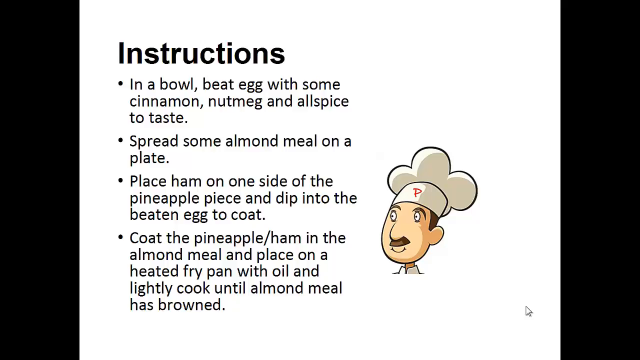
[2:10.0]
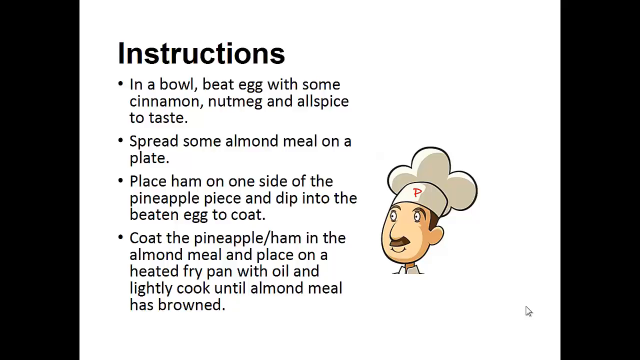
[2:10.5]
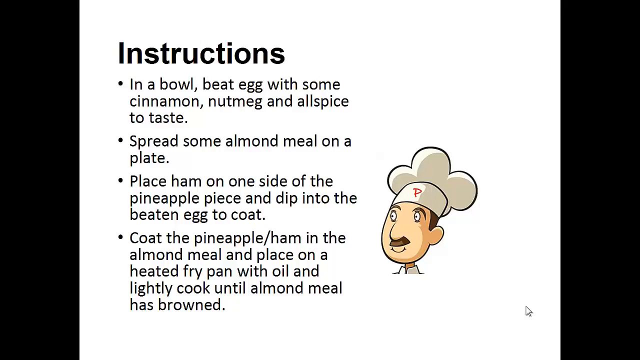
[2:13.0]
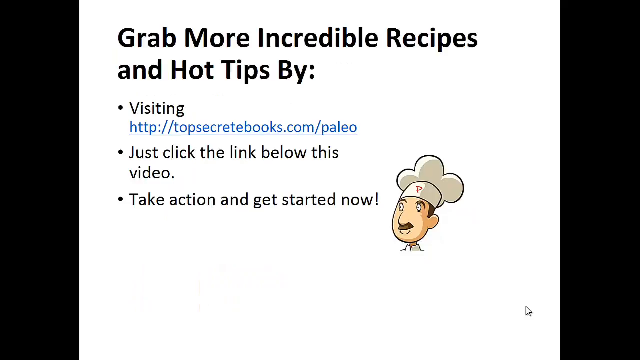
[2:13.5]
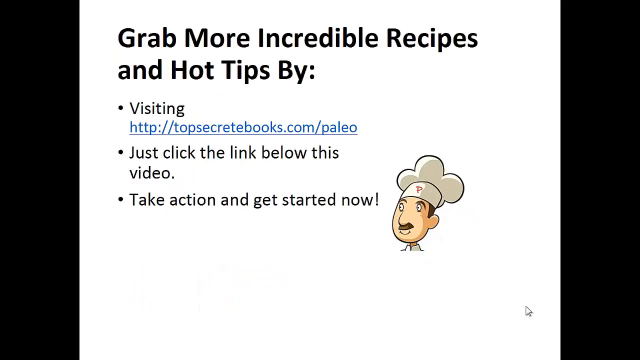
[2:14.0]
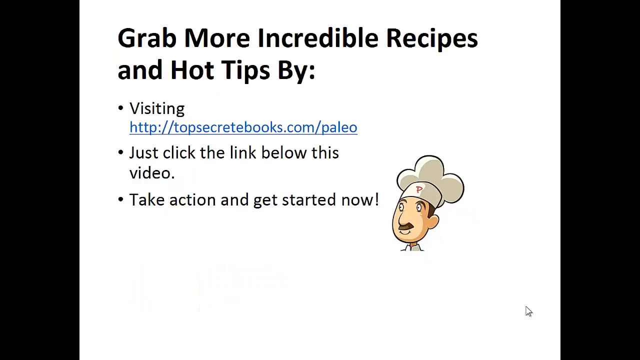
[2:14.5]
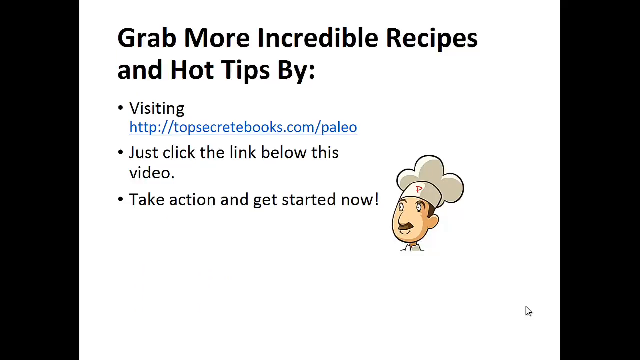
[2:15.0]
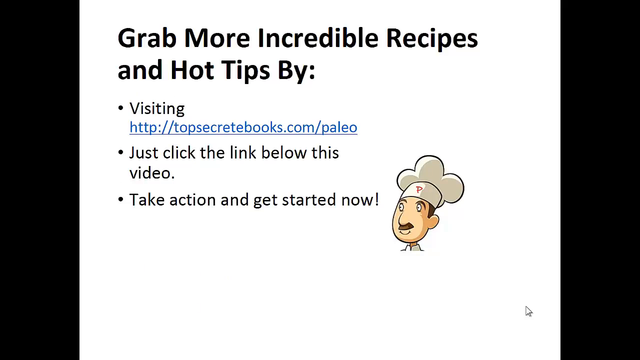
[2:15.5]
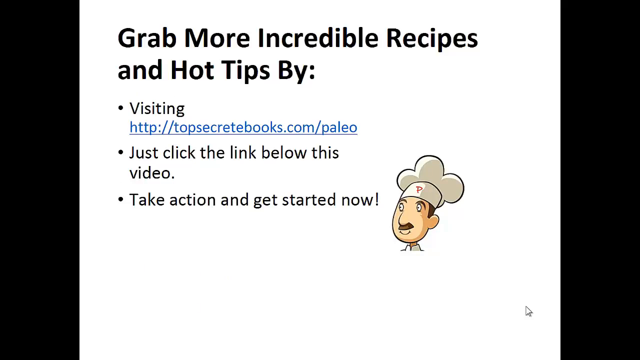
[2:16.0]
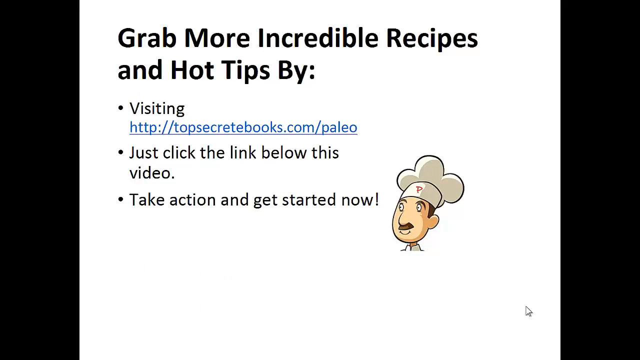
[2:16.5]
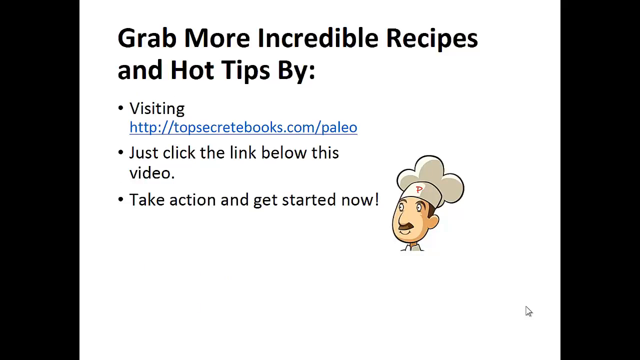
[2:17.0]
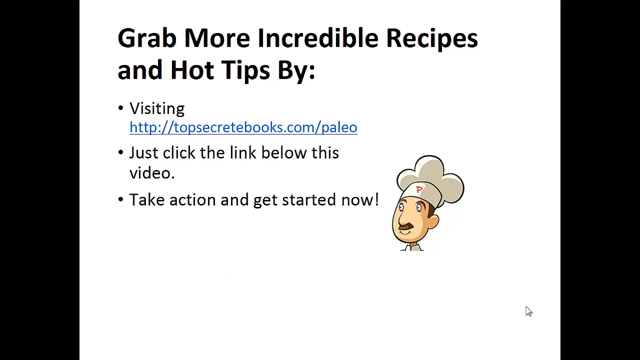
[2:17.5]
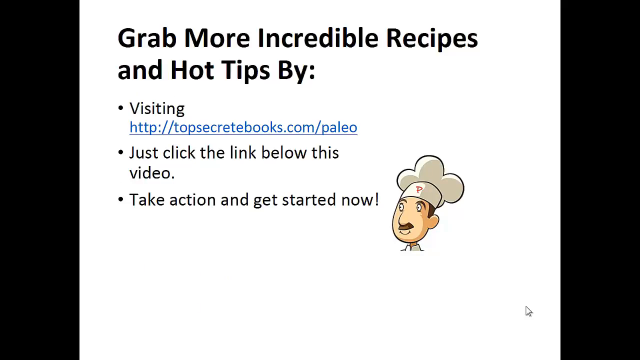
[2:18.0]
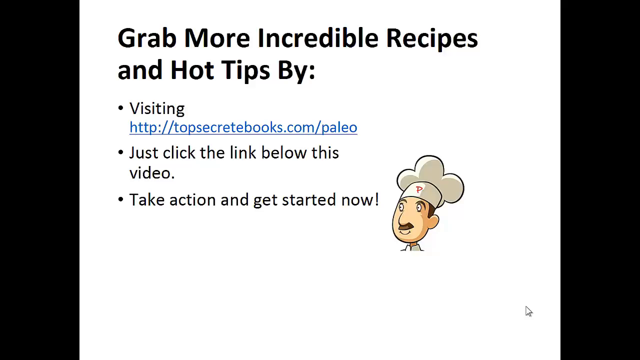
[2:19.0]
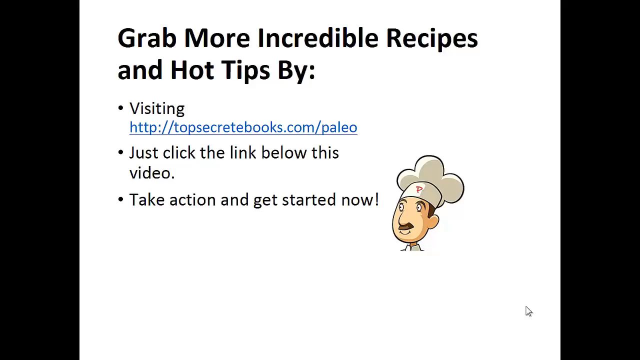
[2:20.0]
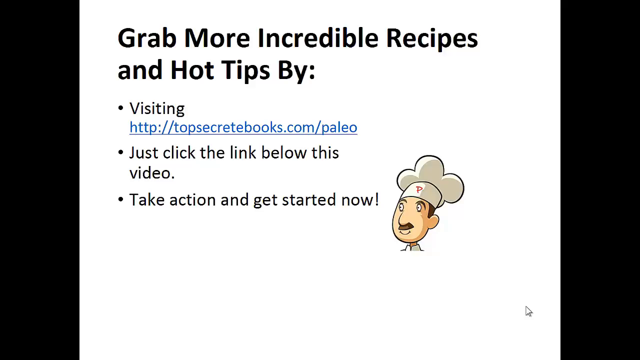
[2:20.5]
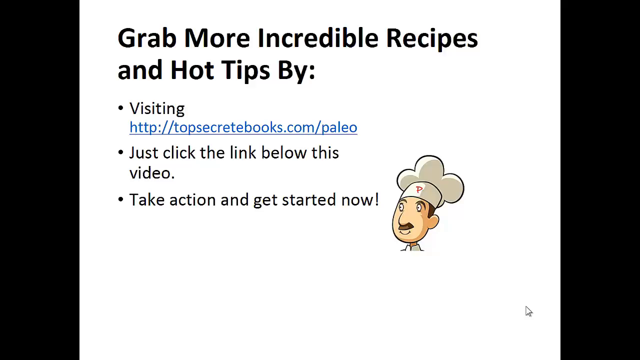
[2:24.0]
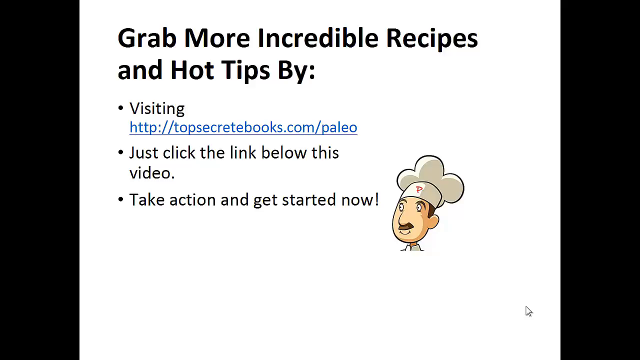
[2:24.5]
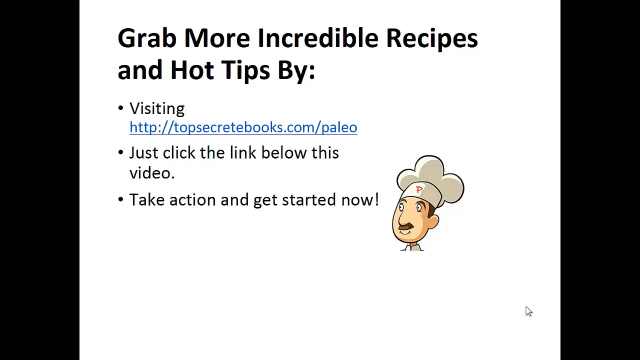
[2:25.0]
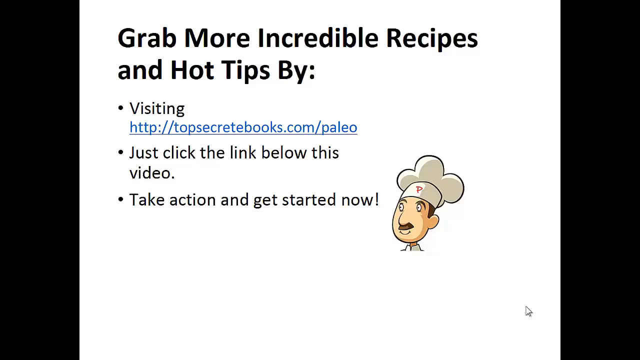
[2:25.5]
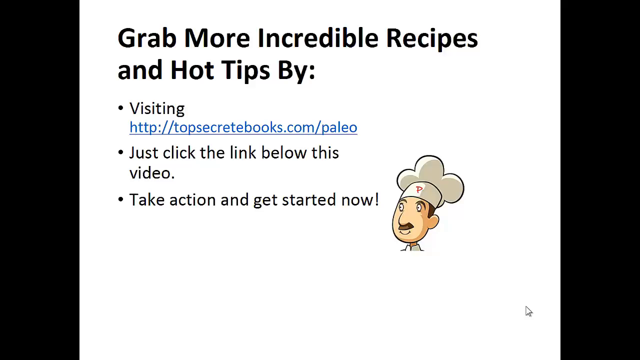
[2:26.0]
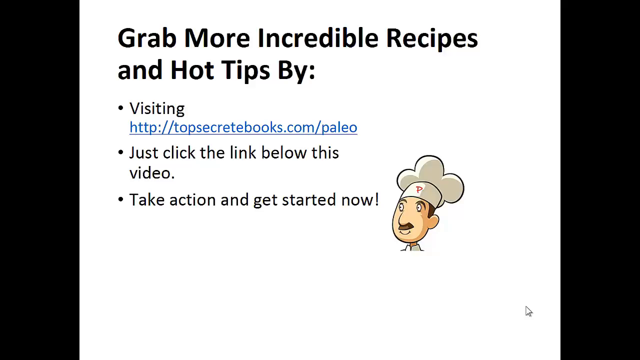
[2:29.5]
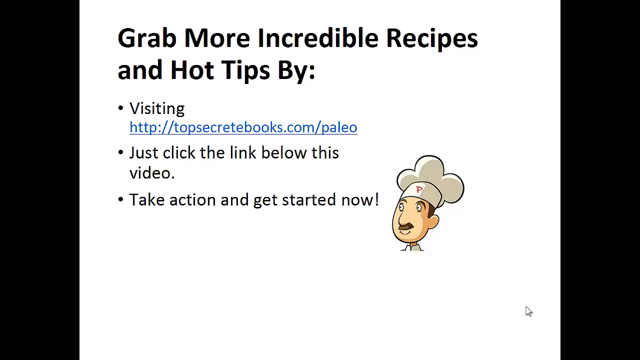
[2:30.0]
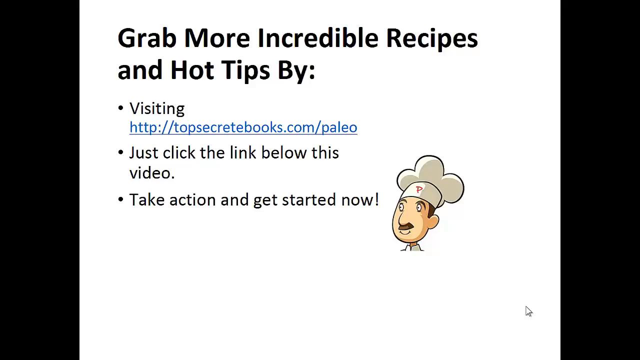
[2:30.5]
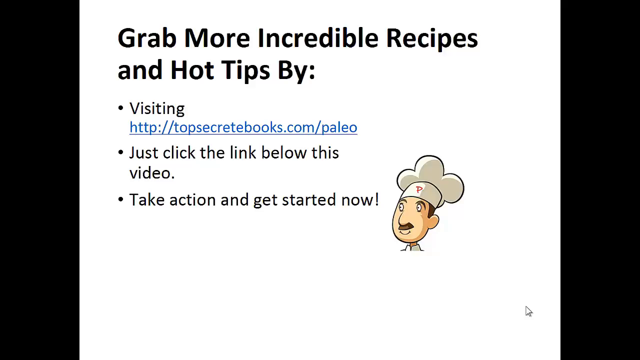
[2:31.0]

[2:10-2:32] A bold black heading reads "instructions", with four sub-points beneath it in black, not bold: "In a bowl, beat egg with some cinnamon, nutmeg and allspice to taste." "Spread some almond meal on a plate." "Place ham on one side of the pineapple piece and dip into the beaten egg to coat." "Coat the pineapple or ham in the almond meal and place on a heated fry pan with oil and lightly cook until almond meal has browned." The next close-up shows the heading "grab more incredible recipes and hot tips by" with three points: "visiting http/topsecretbooks.com/paleo", written in blue, "just click the link below this video", and "Take action and get started now!". Next to the text is a chef with a chef hat.